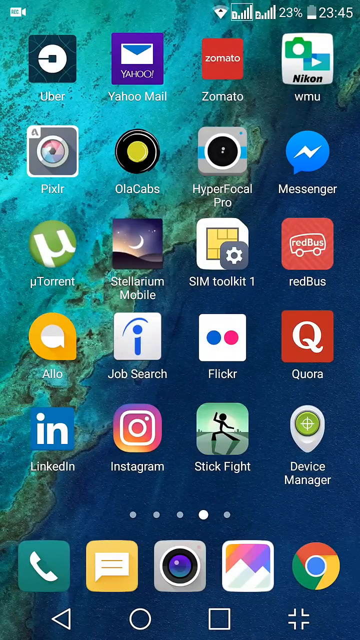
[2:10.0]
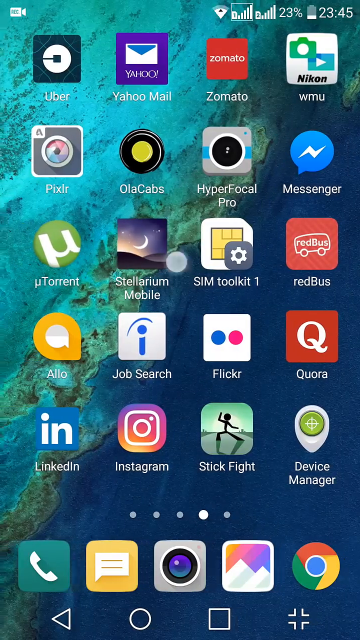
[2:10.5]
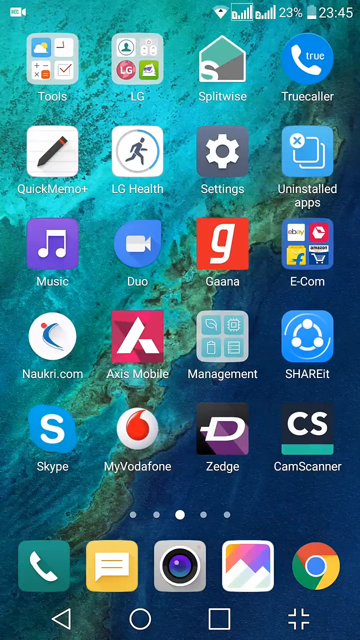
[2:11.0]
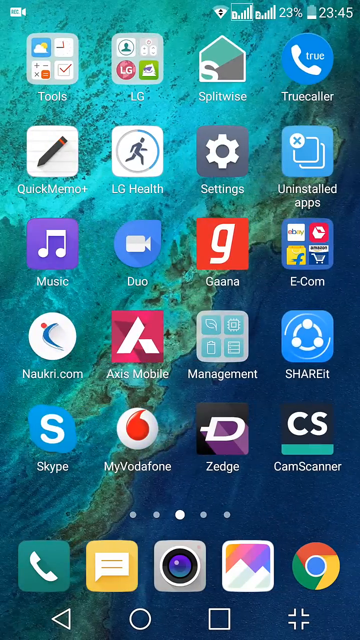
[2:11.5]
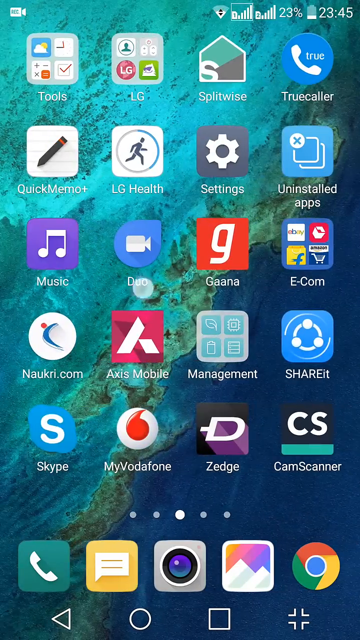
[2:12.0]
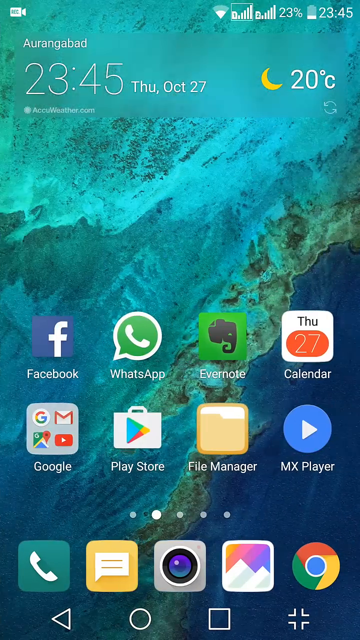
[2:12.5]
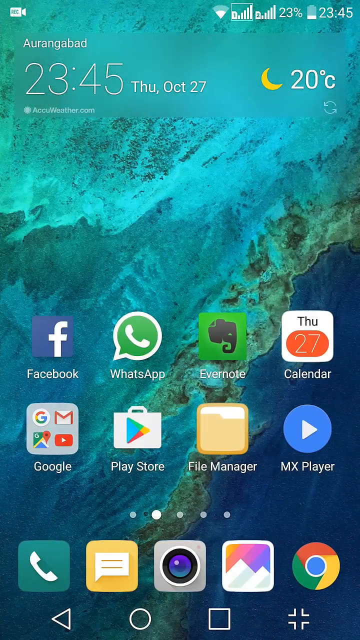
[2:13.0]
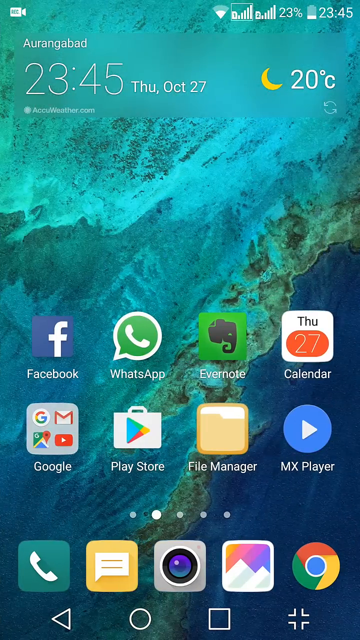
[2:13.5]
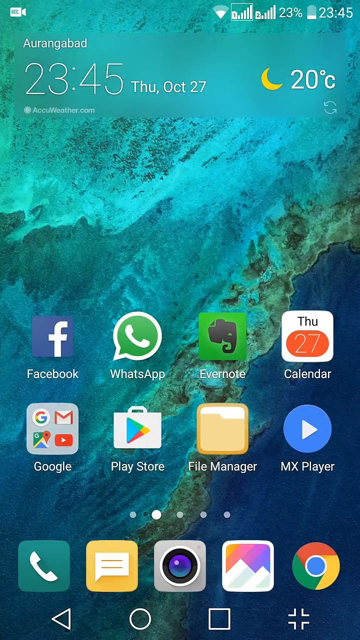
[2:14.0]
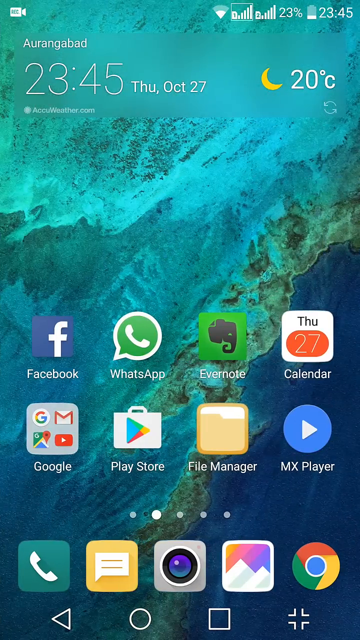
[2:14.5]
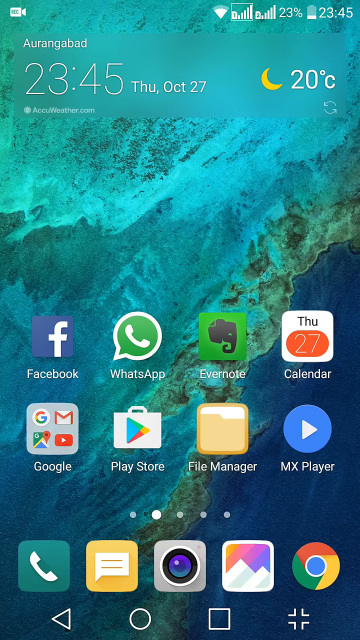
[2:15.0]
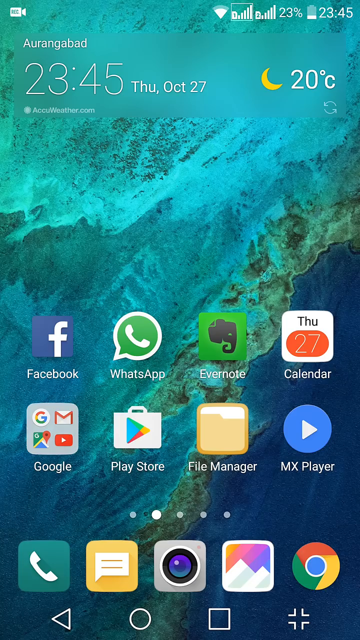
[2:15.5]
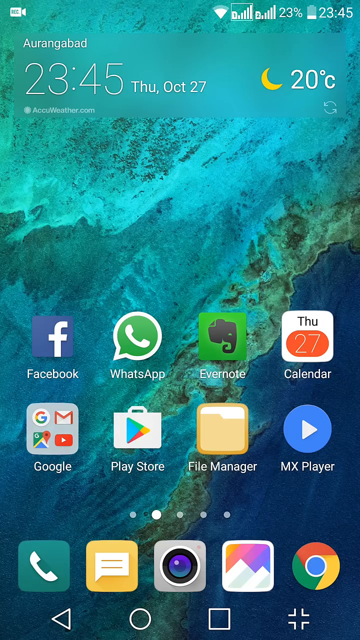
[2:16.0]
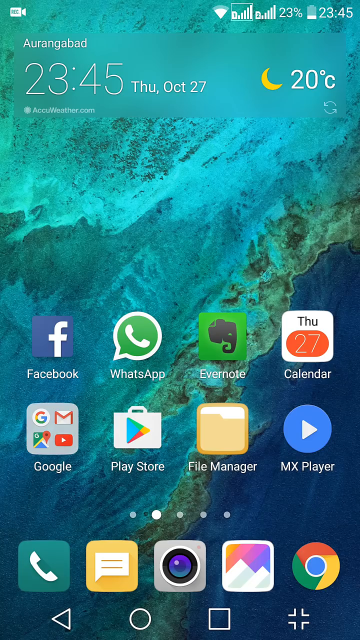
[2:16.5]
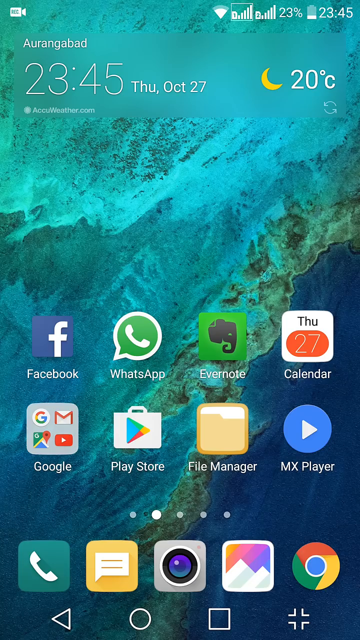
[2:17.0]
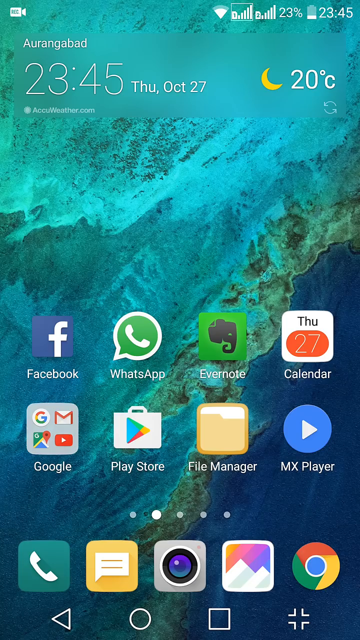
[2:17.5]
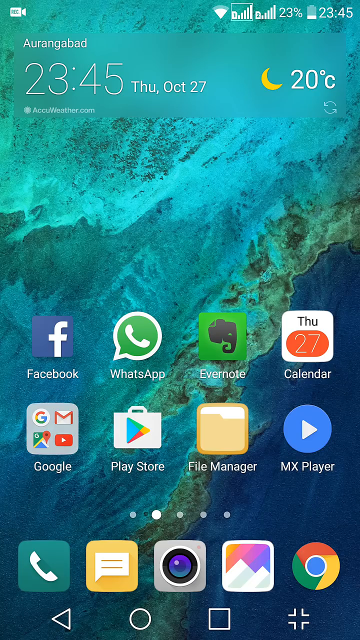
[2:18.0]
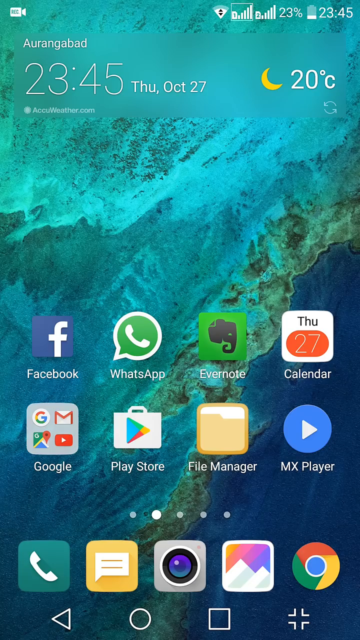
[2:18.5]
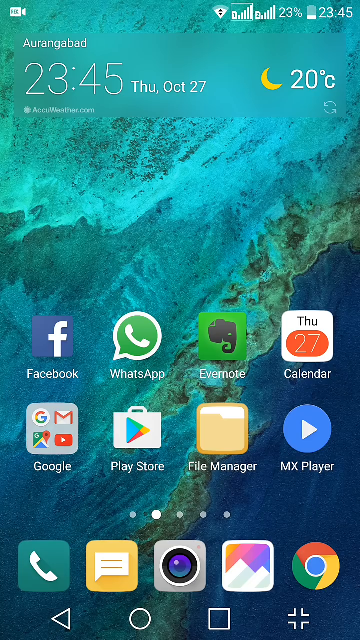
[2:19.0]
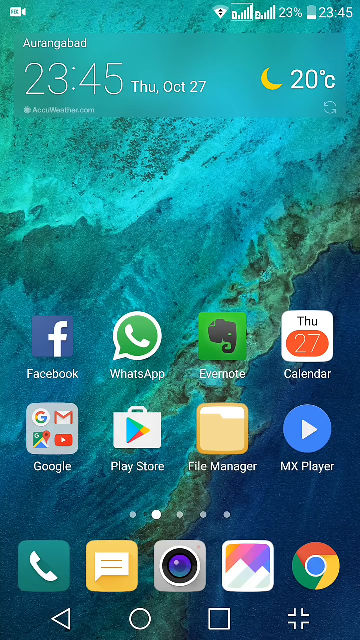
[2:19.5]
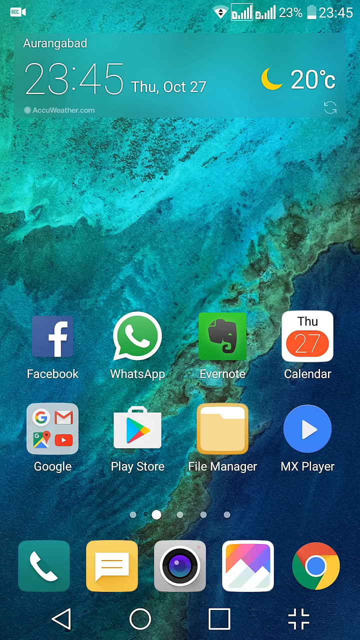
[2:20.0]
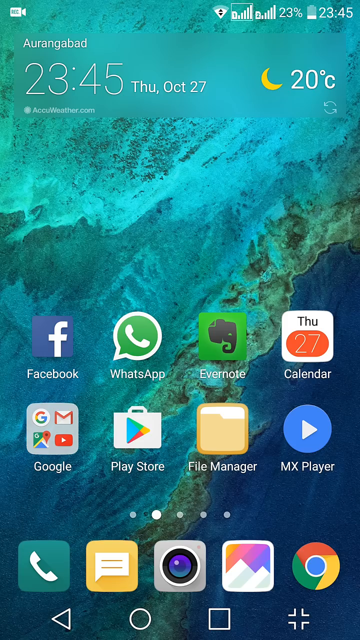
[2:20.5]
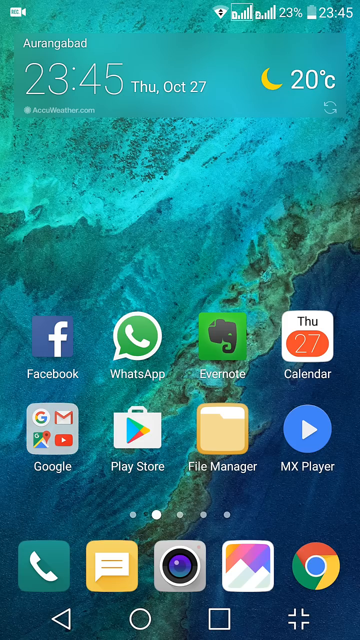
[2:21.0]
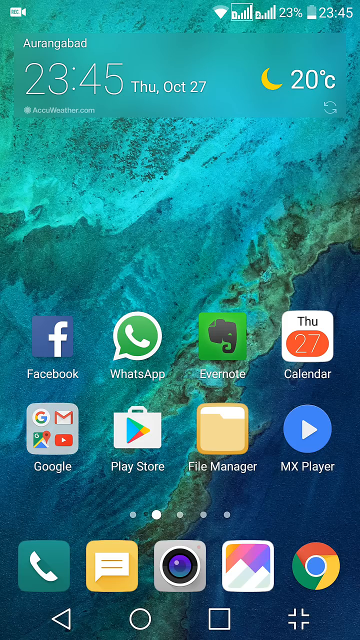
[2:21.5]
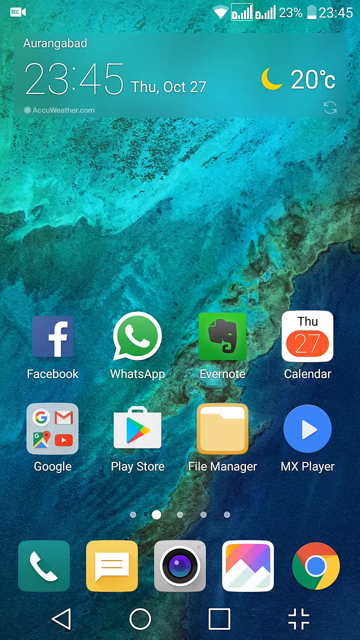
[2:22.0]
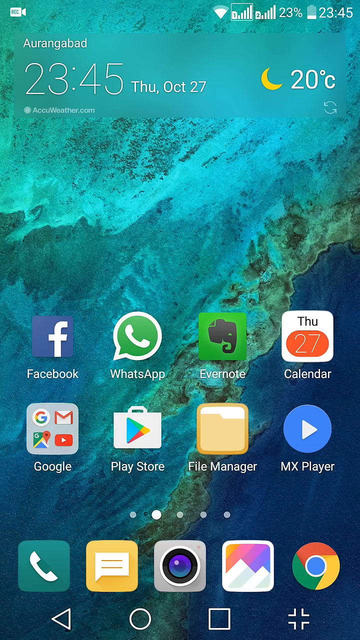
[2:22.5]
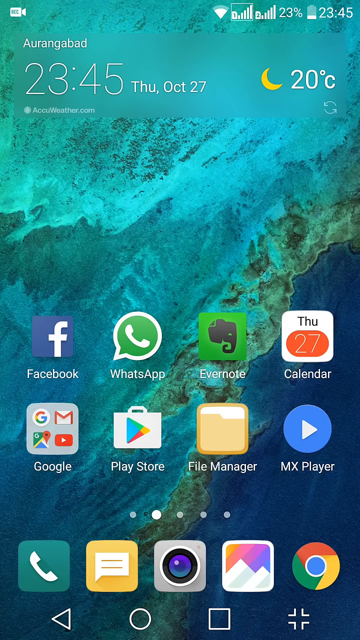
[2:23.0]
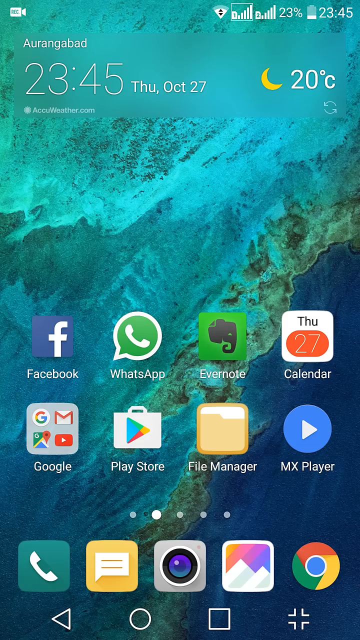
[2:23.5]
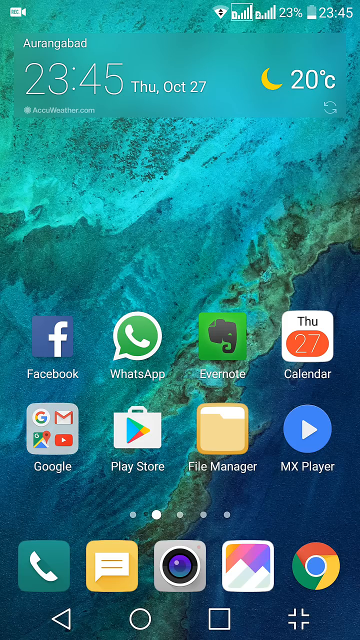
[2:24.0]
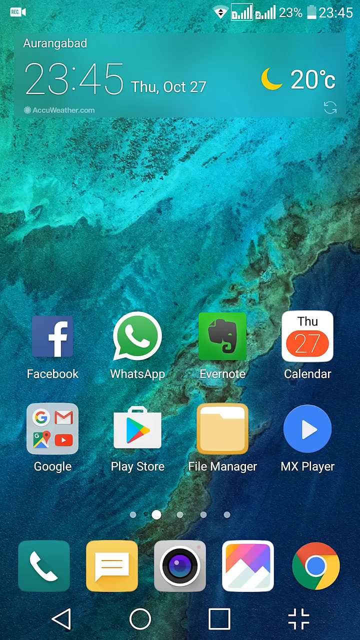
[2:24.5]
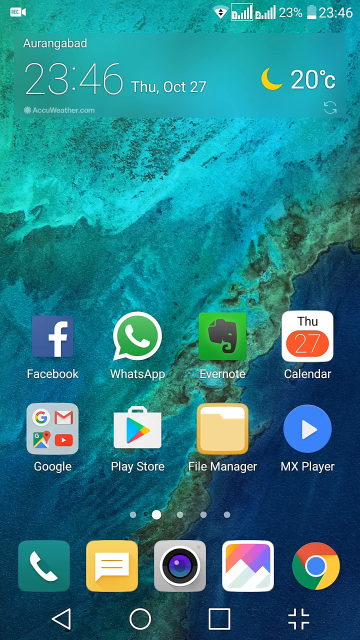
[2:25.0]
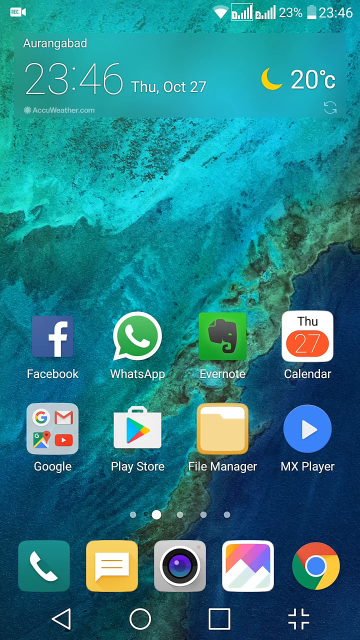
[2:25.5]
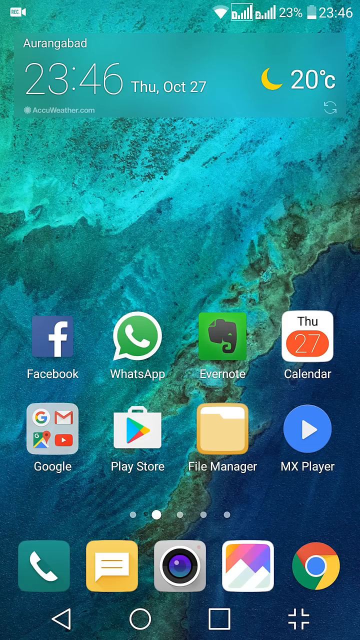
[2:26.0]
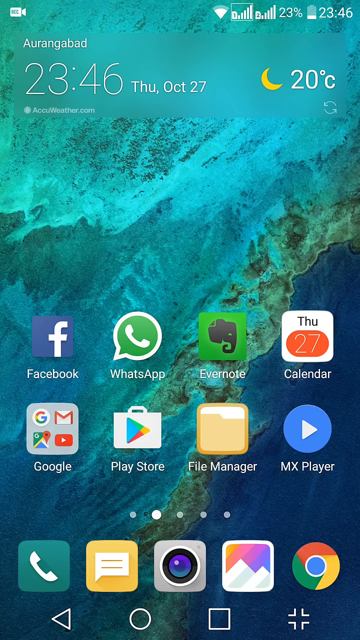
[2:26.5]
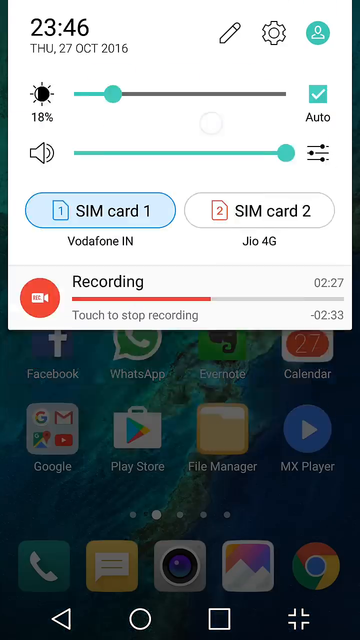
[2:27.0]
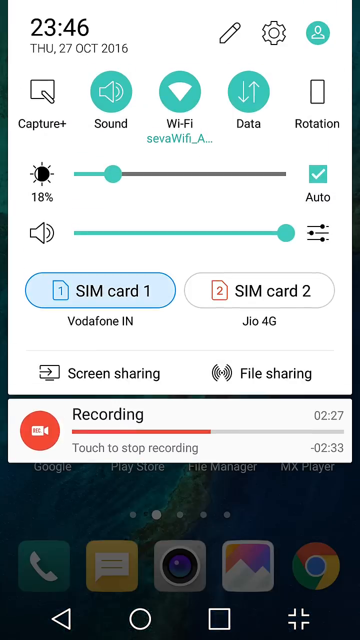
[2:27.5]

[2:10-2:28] App icons appear, including Yahoo Mail, possibly Zomato, Messenger, Redbus, Job Search for Indeed, LinkedIn and Instagram. As the person swipes, more come into view: WhatsApp next to Facebook, and beneath them a Google section with Gmail, Google Search, Google Maps and YouTube, plus Play Store, File Manager and MX Player. The screen then stays put for a while, showing "Thursday 27th" for the calendar.